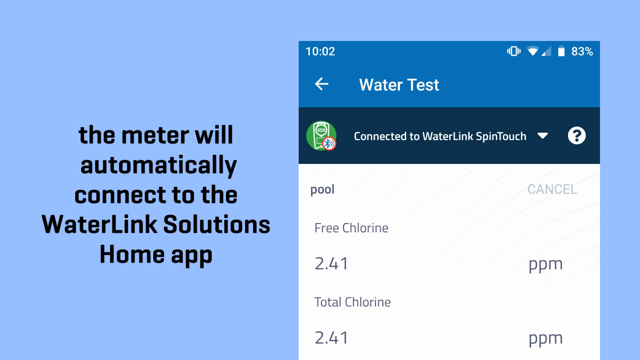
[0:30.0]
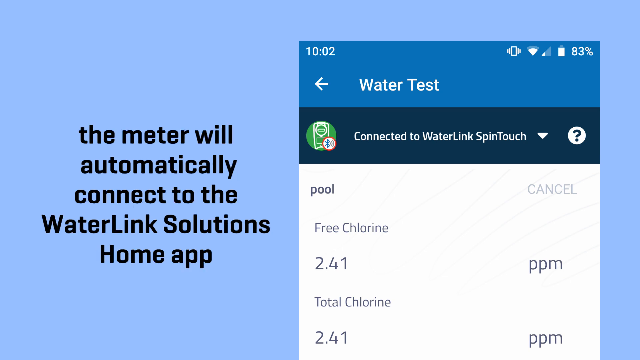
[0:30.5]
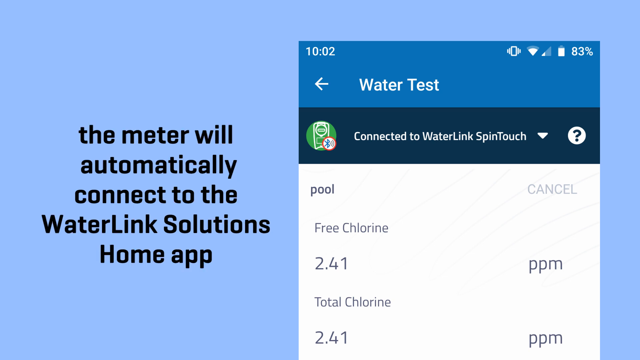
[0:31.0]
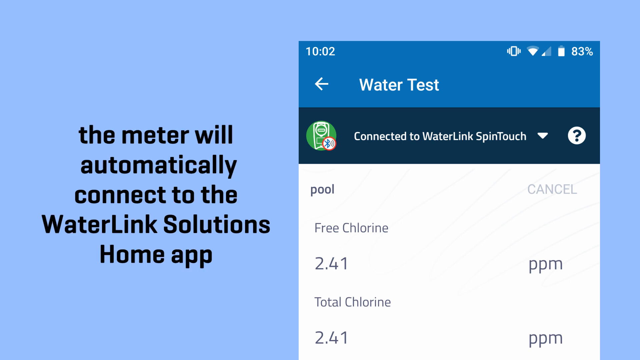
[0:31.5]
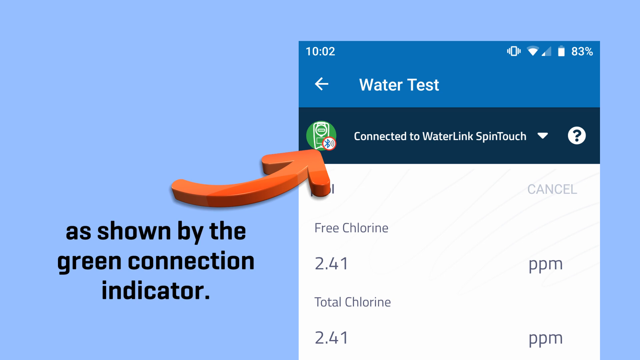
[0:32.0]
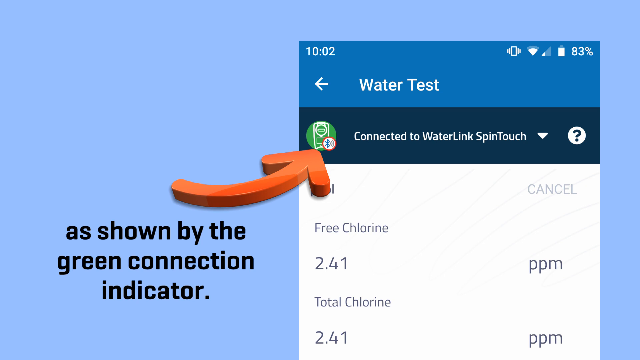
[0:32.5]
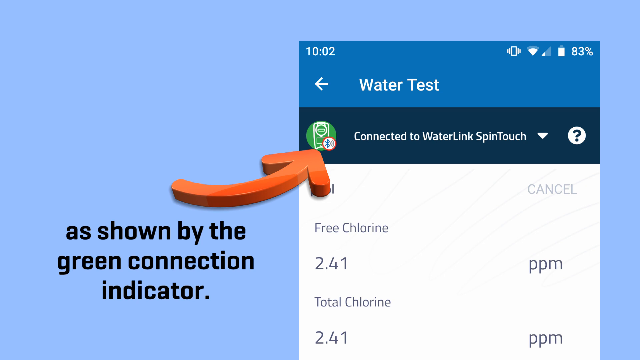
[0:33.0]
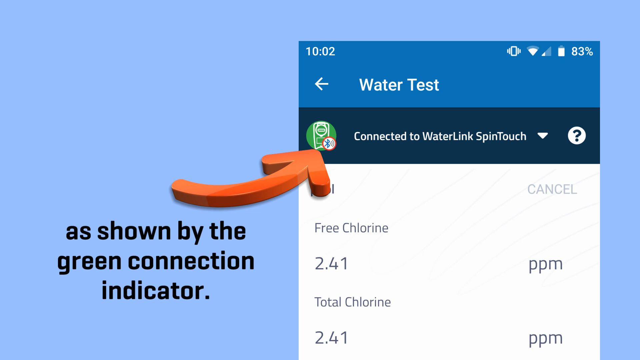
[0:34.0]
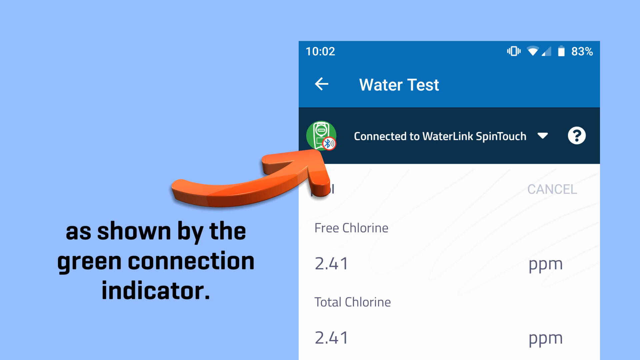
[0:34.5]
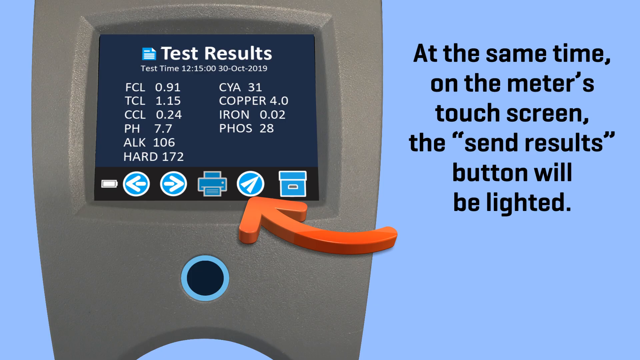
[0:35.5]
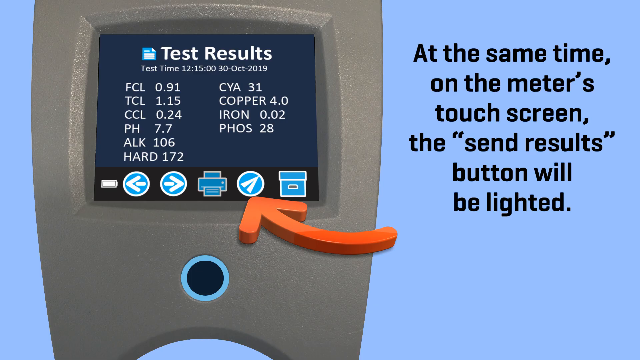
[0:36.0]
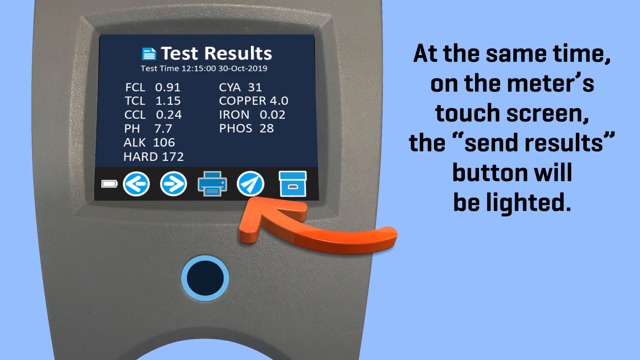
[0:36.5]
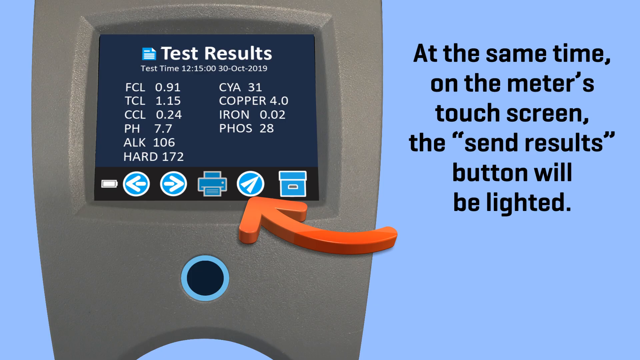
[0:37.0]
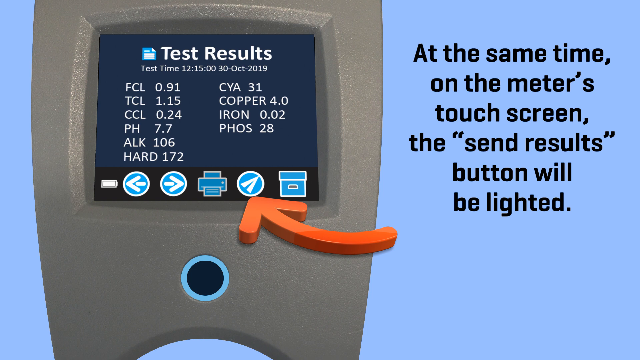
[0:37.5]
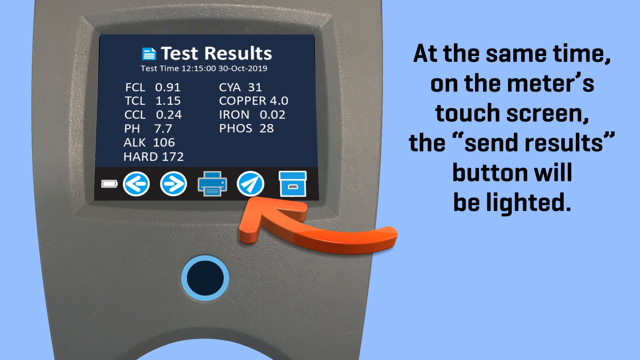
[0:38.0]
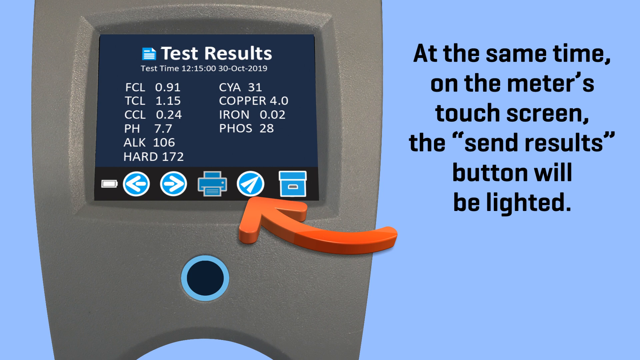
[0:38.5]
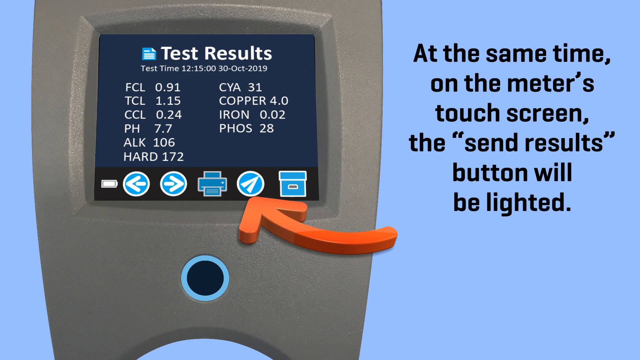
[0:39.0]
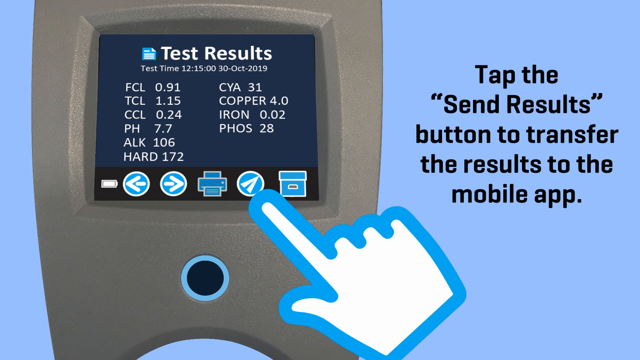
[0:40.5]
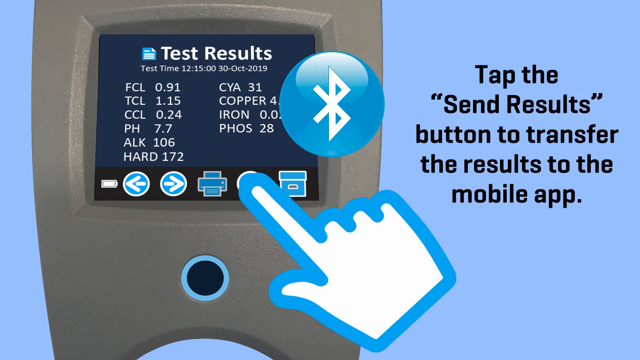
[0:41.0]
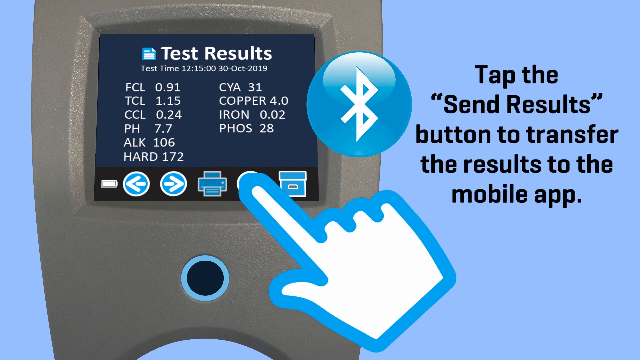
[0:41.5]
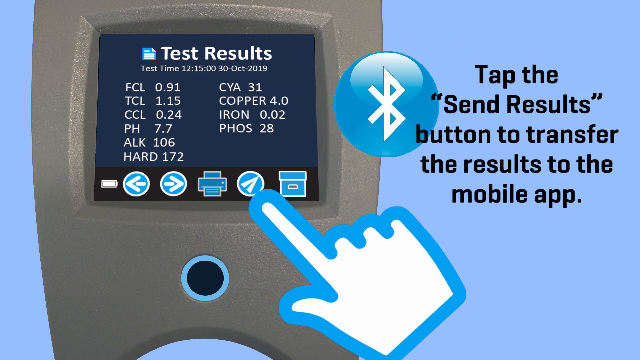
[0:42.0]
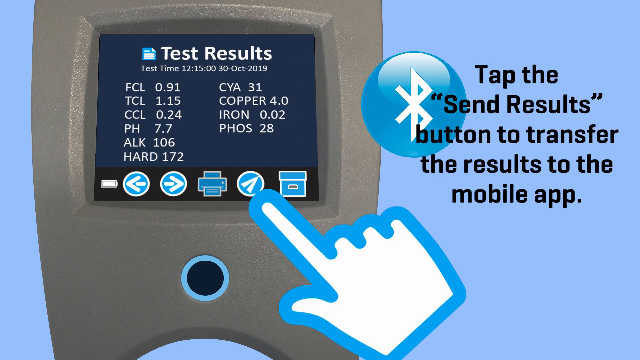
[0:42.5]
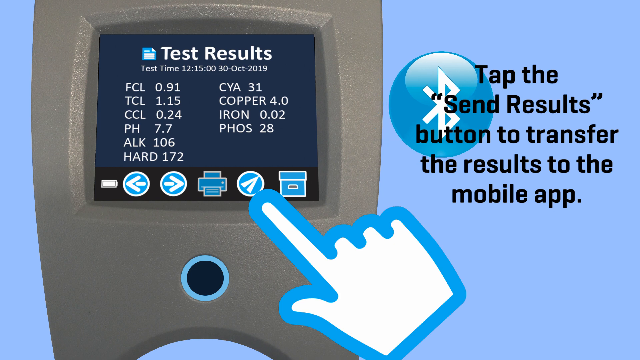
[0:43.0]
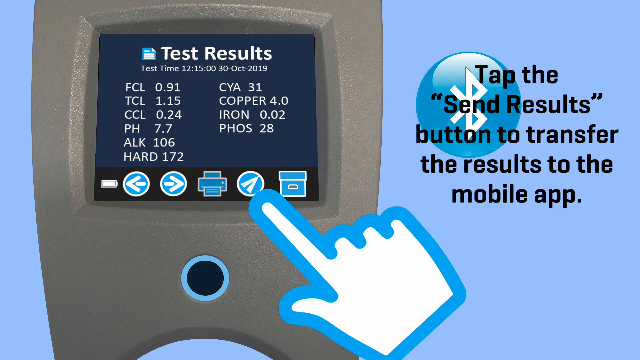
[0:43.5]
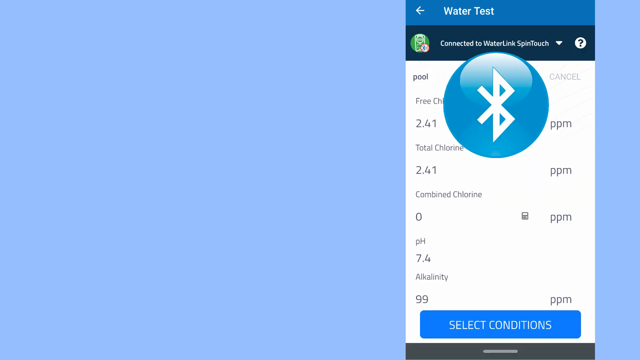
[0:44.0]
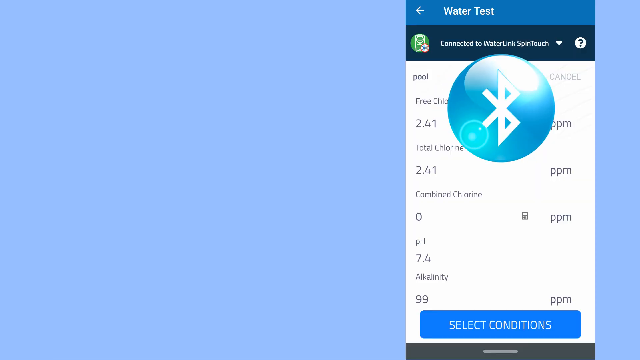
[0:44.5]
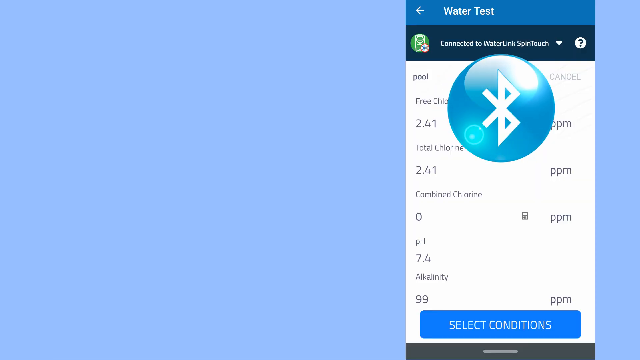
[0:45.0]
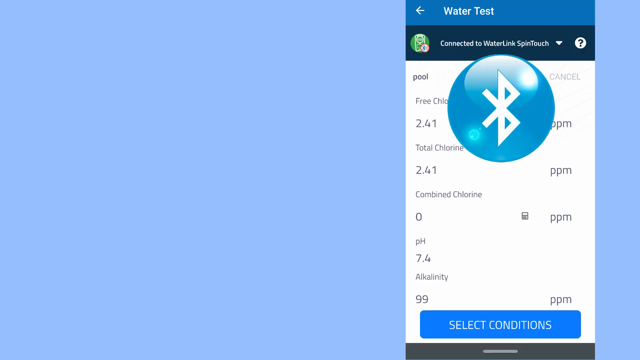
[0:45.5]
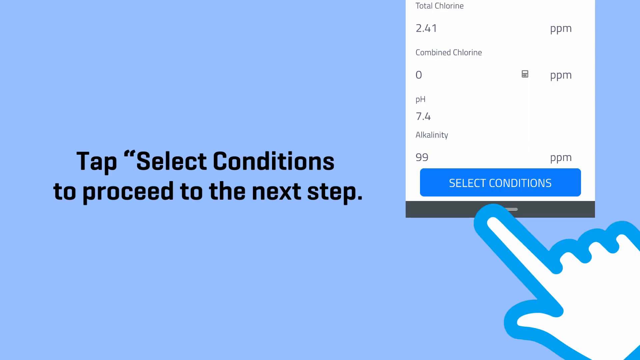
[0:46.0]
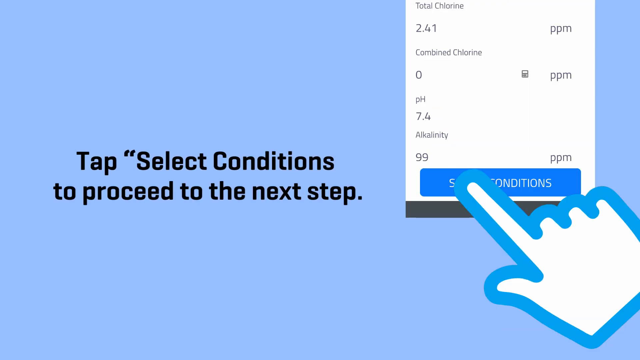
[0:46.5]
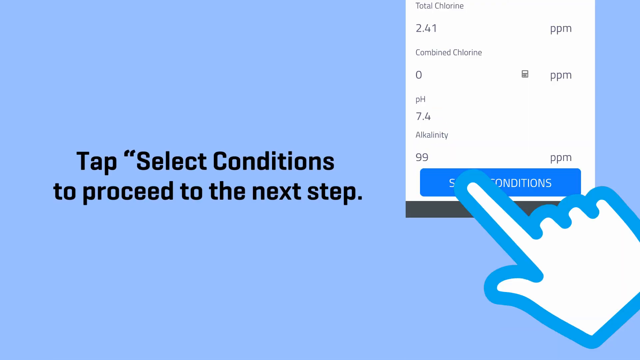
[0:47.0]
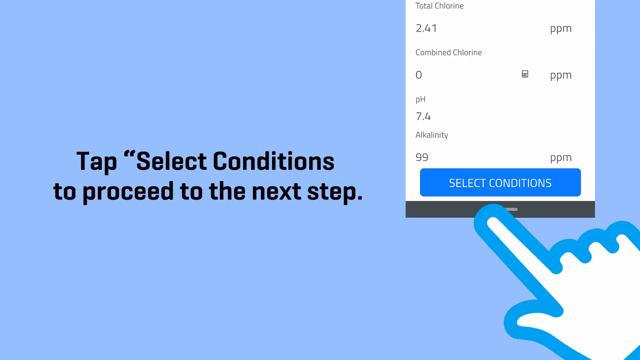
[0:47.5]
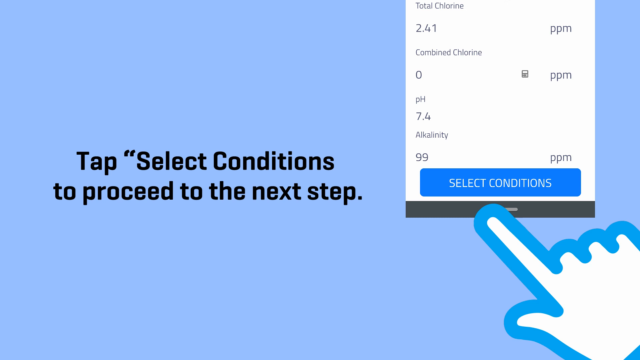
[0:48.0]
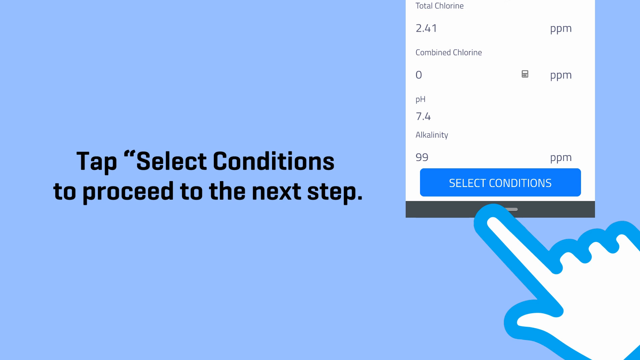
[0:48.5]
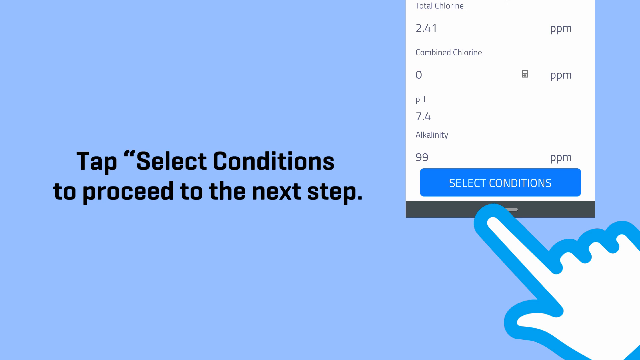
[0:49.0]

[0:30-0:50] Text reads "the meter will automatically connect to the Water Link Solutions home app" on a blue background, and on the right-hand side is a screenshot of a mobile phone showing what the app will look like in use. The next text reads "as shown by the green connection indicator", and a red arrow points over to the green connection indicator on the app. The next screen shows the device with a red arrow pointing toward where to touch, and the text reads "At the same time, on the meter's touch screen, the send results button will be lighted"; the arrow points toward the send results button. The next screen shows a blue hand pointing toward the device, with text reading "tap the send results button to transfer the results to the mobile app". A blue symbol, a circle with a weird shape in the middle, moves from left to right across the screen toward the phone app. The next screen reads "tap select conditions to proceed to the next step", with a blue hand showing exactly where to tap on the phone. The hand is a cartoon, not a real hand.